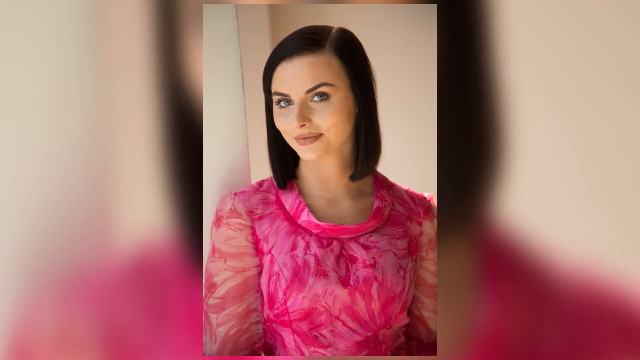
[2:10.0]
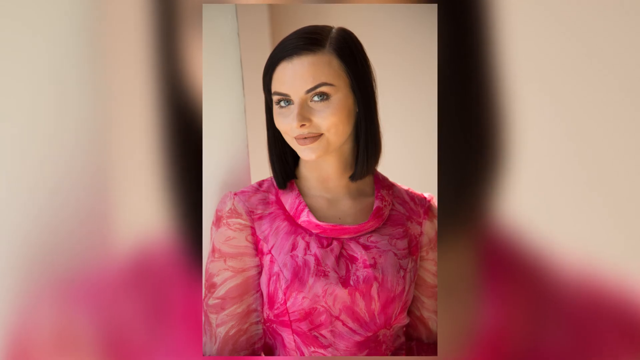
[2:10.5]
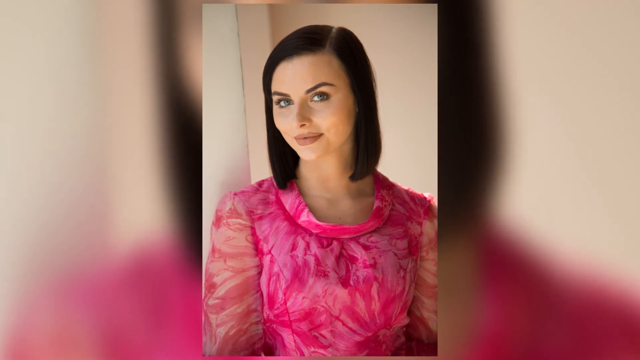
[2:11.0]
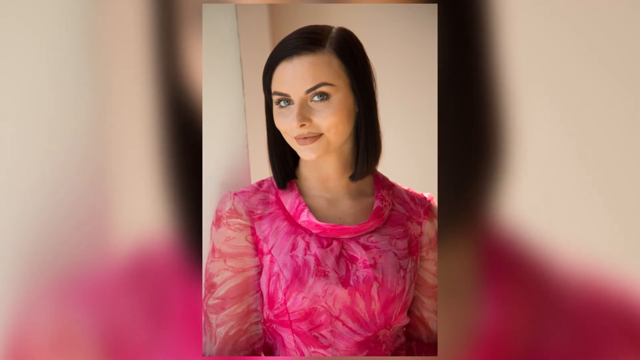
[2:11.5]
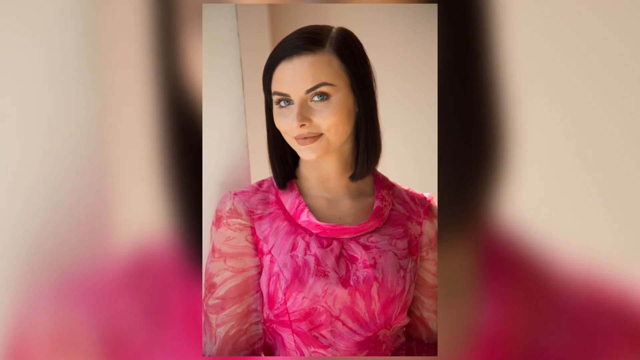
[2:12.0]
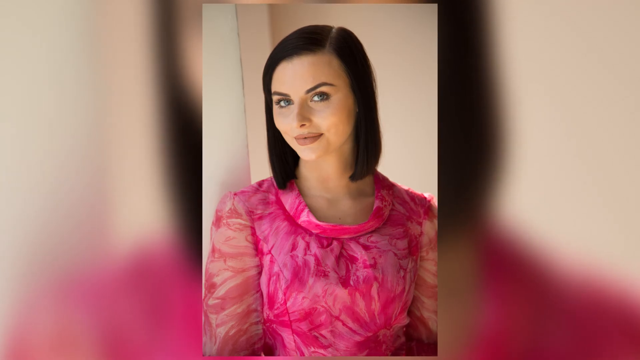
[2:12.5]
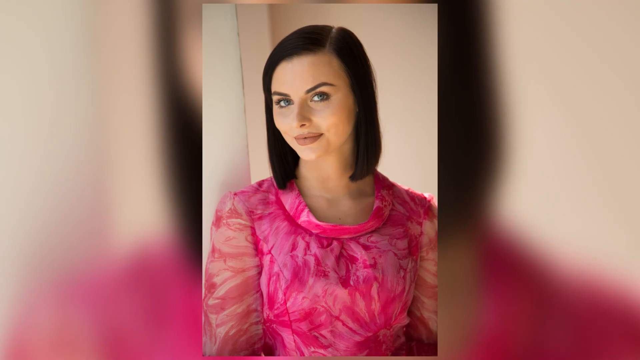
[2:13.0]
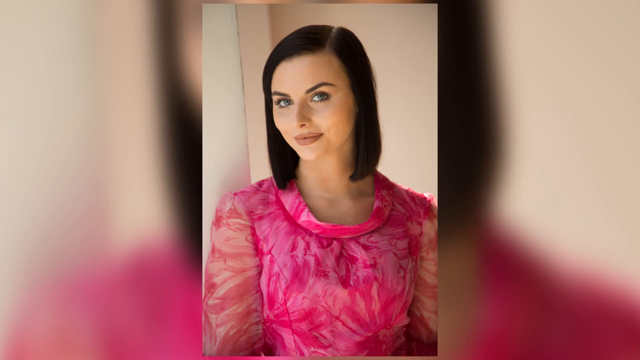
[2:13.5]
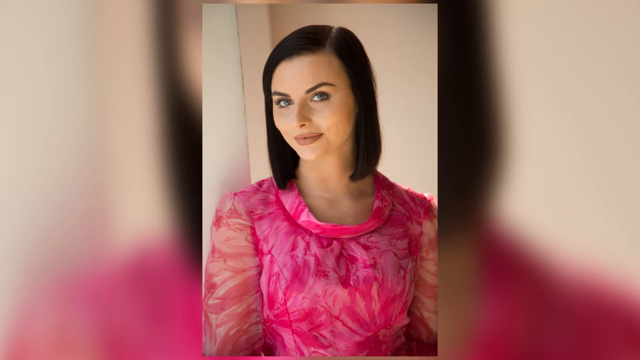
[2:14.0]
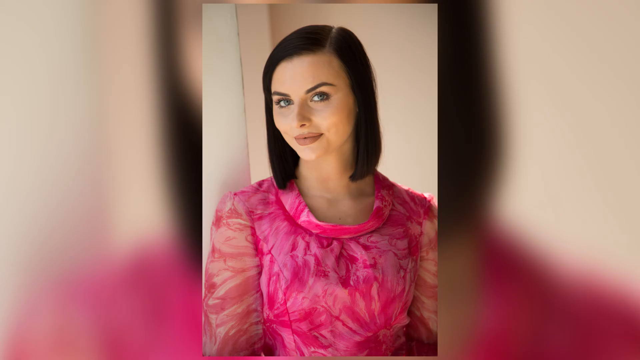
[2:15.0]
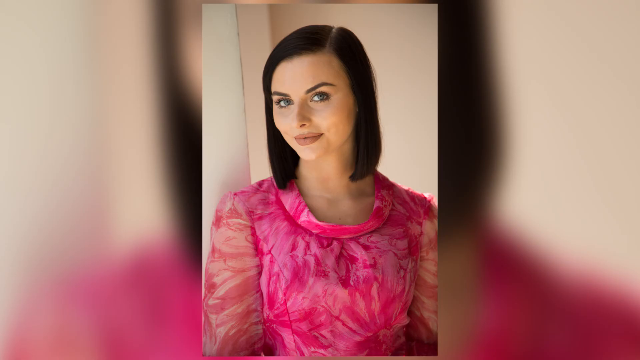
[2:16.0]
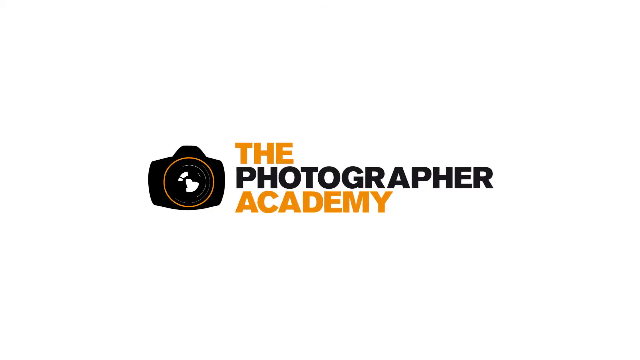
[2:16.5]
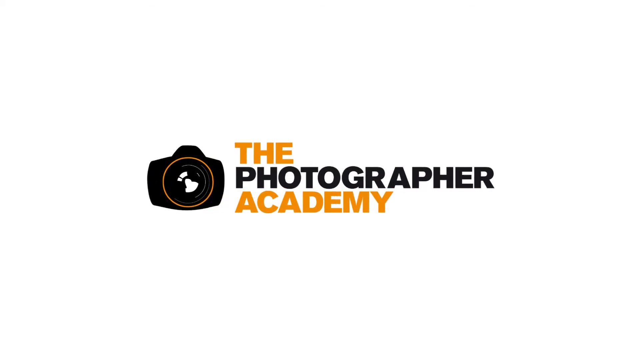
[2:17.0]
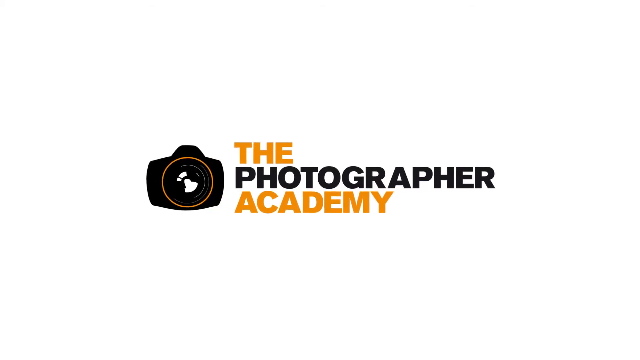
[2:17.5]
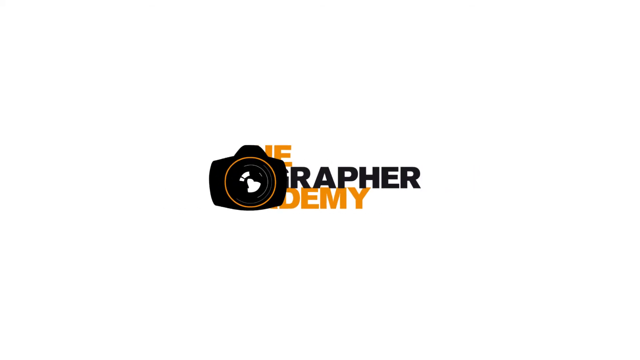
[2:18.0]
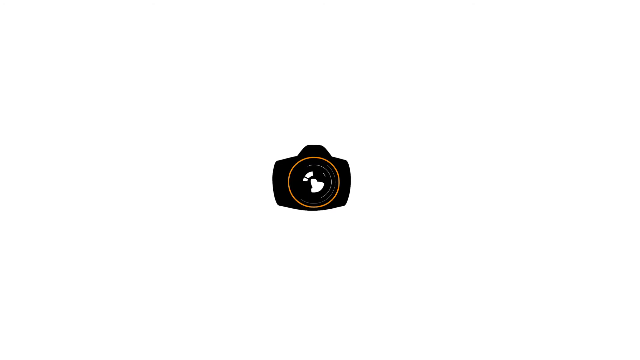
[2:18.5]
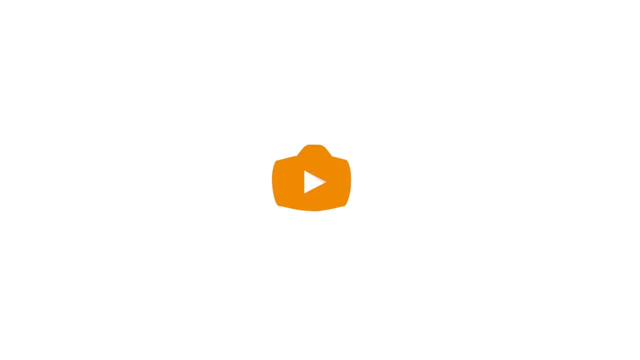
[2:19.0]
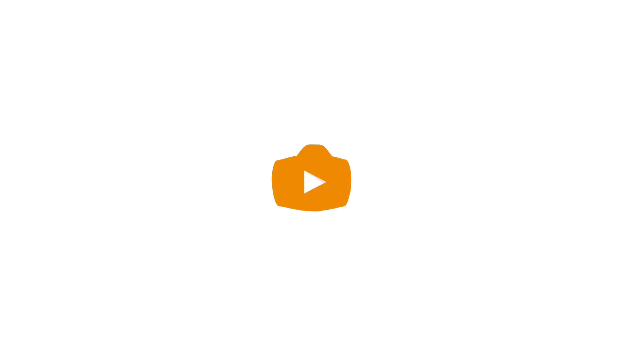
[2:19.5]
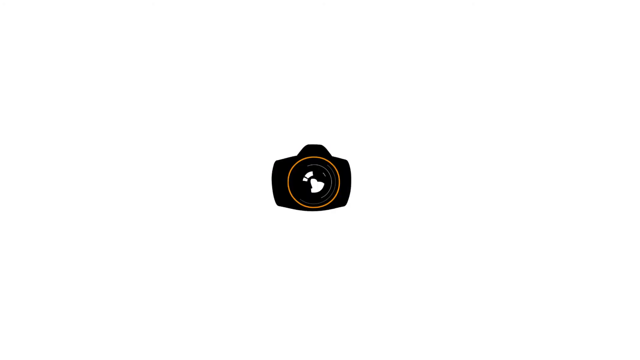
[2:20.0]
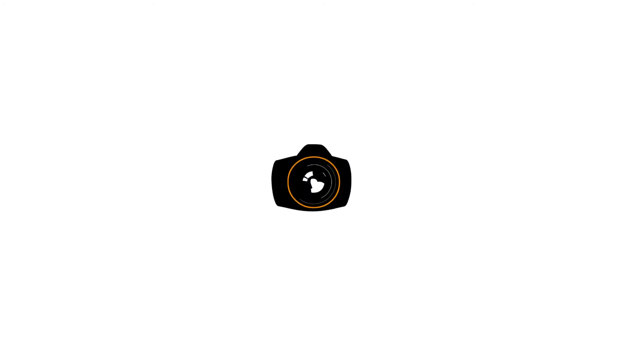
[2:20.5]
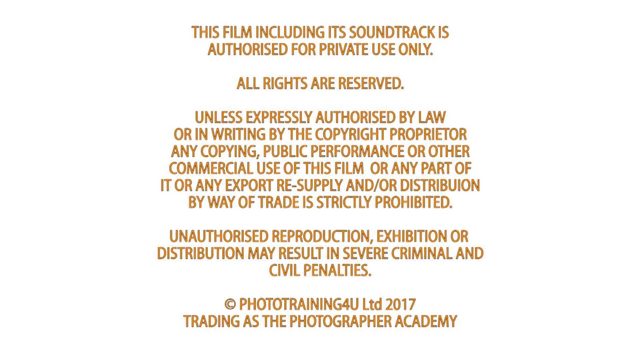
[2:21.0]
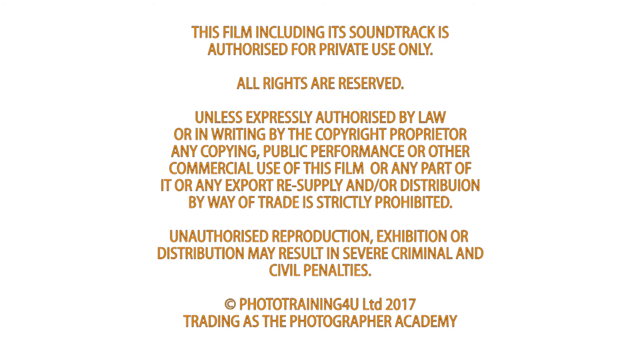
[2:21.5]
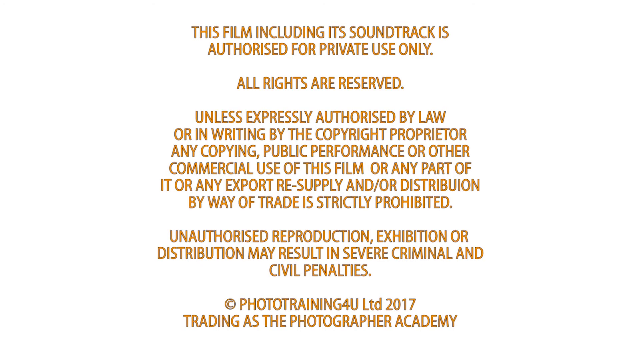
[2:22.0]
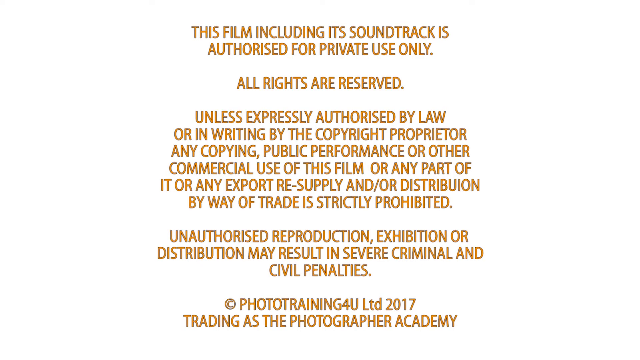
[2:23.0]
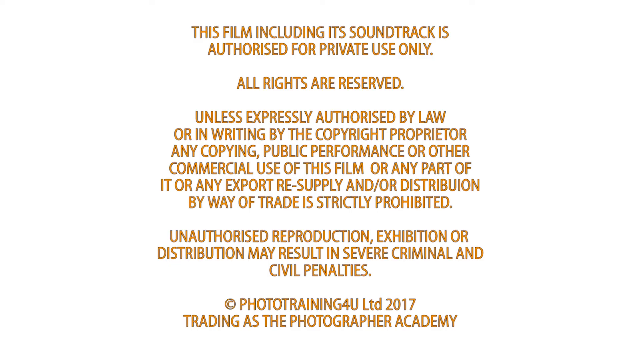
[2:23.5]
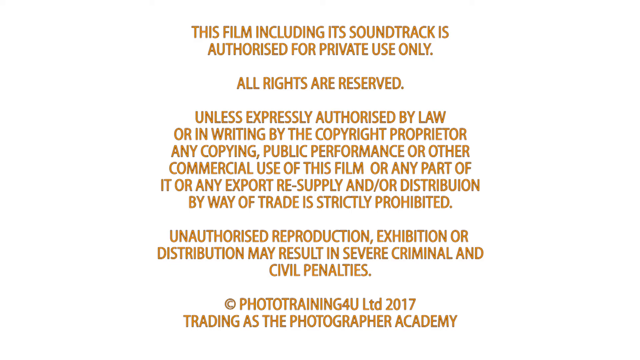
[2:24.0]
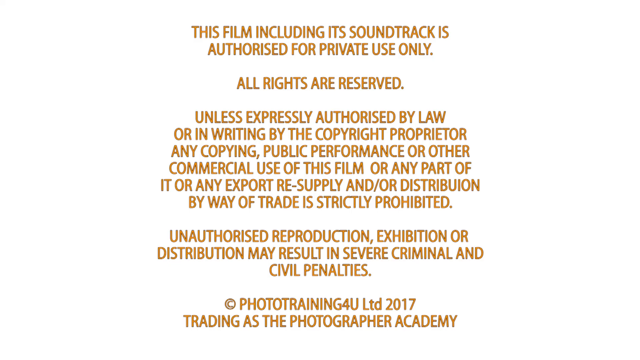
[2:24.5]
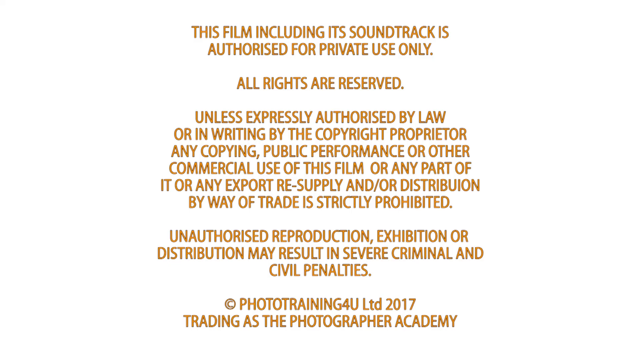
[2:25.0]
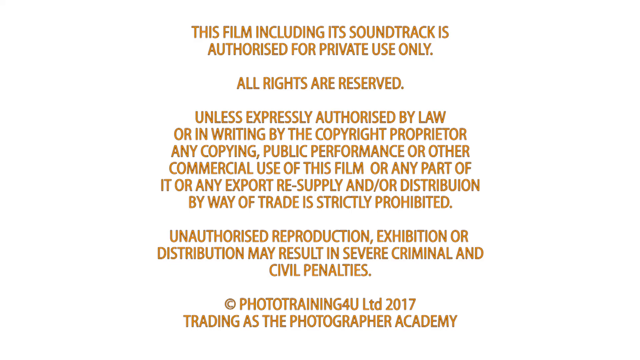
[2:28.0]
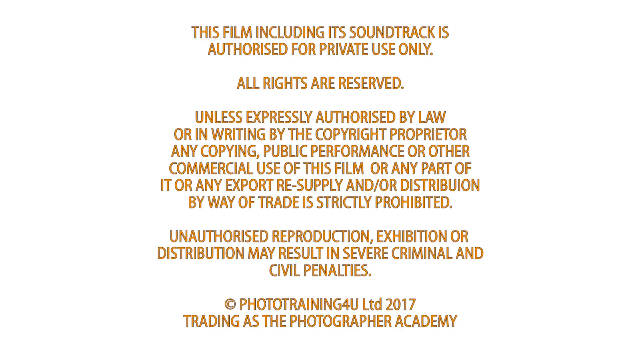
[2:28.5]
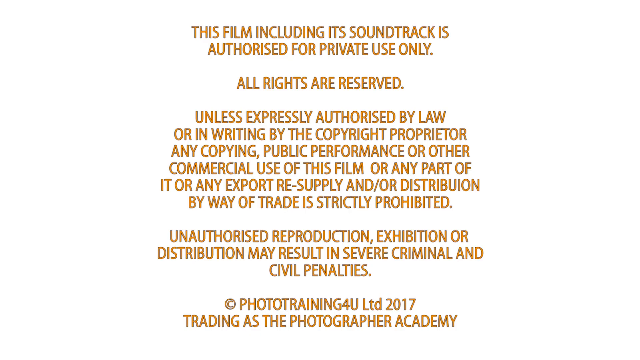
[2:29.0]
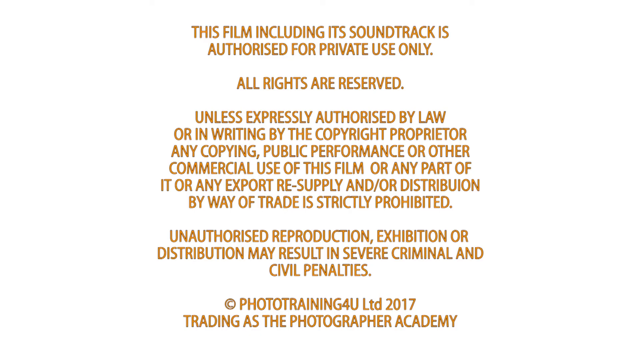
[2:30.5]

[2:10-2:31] The photo of the woman in the pink dress is still displayed over the blurred copy of itself, showing her bright green eyes and clear skin. It then switches to the company's logo with the text "The Photographer Academy." Next comes a bright orange camera with a little play button, and then a statement from the company reading: "This film, including its soundtrack is authorized for private use only. All rights are reserved unless expressly authorized by law or in writing by the copyright proprietor. Any copying, public performance, or other commercial use of this film or any part of it or any export, re-supply, and or distribution by way of its trade is strictly prohibited. Unauthorized reproduction, exhibition, or distribution may result in severe criminal and civil penalties. Phototraining4U LTD 2017. Trading as a photographer academy." The video ends on this screen.